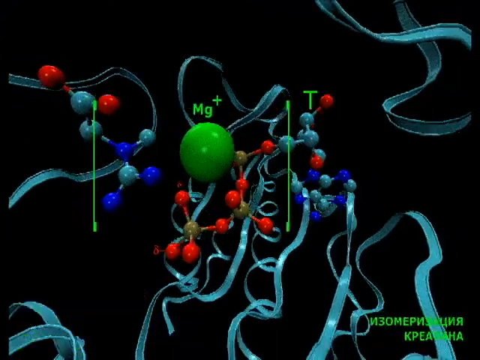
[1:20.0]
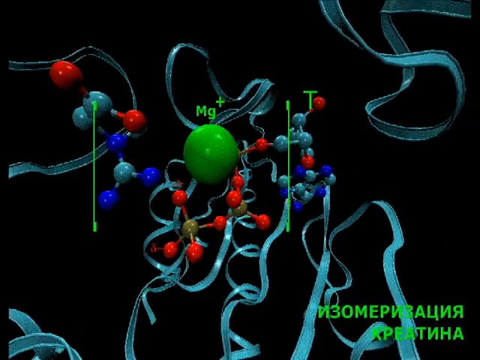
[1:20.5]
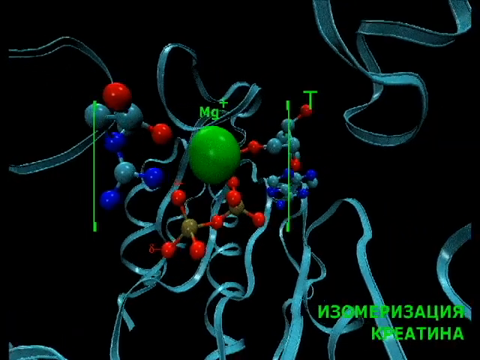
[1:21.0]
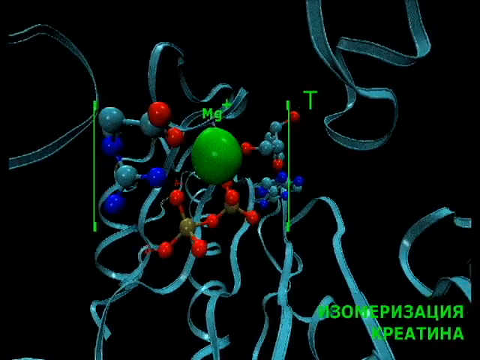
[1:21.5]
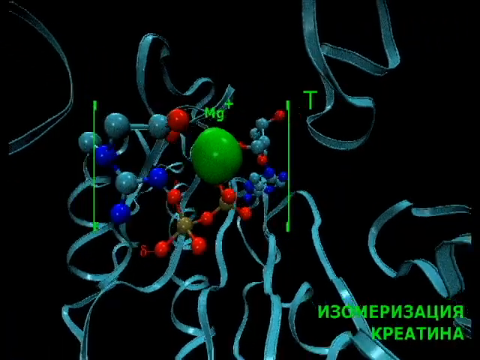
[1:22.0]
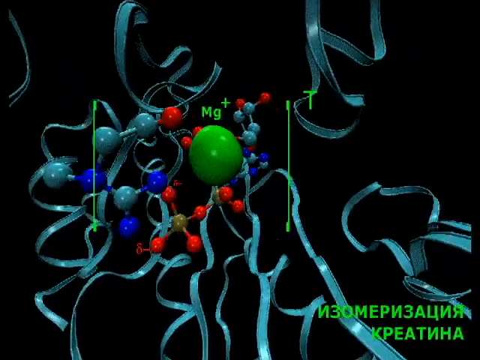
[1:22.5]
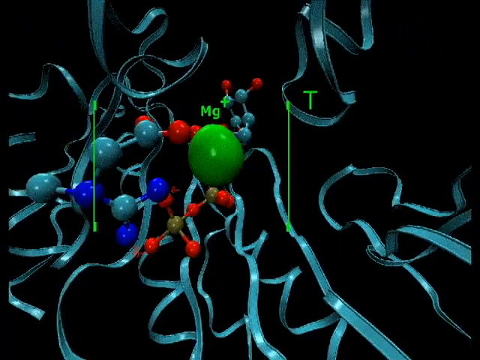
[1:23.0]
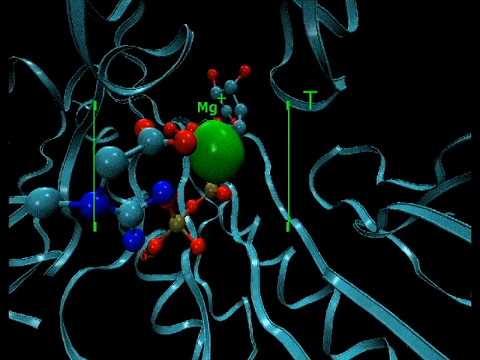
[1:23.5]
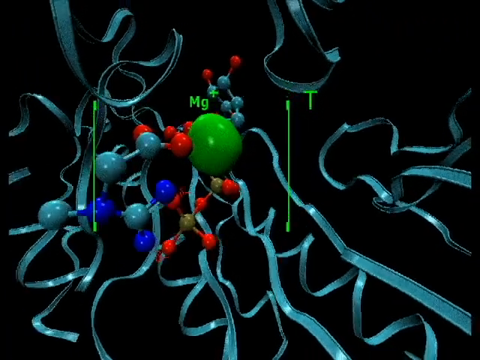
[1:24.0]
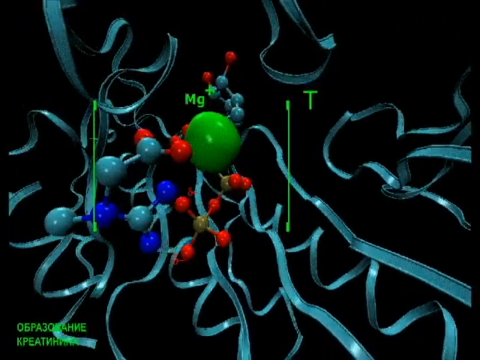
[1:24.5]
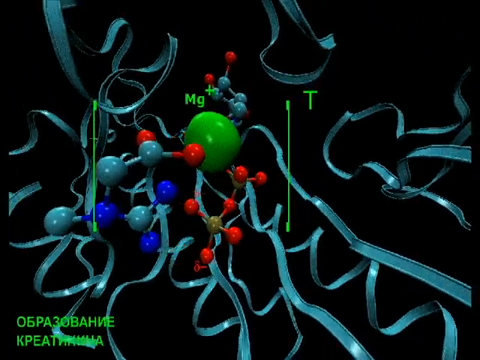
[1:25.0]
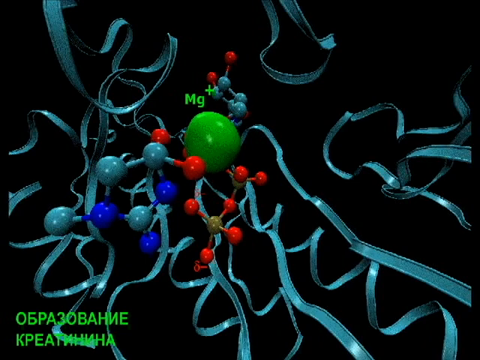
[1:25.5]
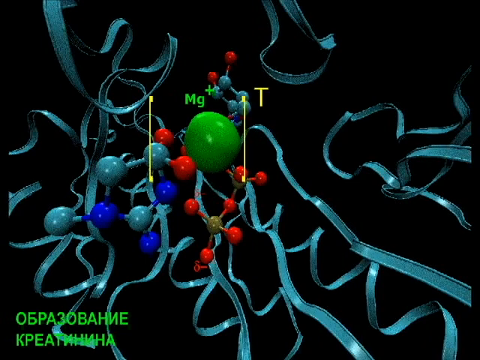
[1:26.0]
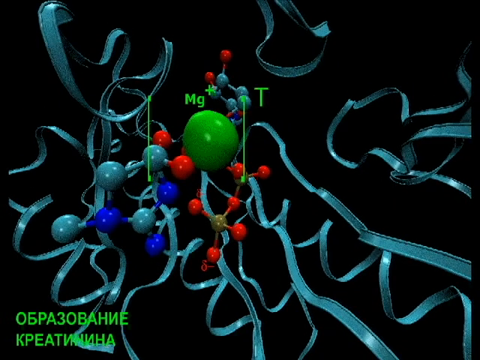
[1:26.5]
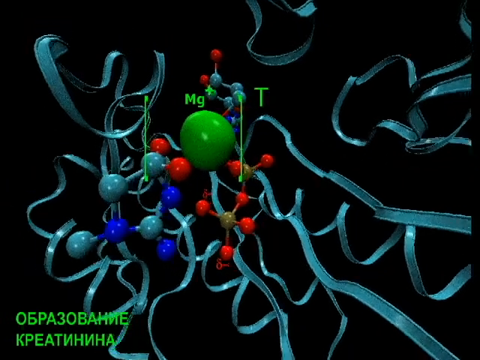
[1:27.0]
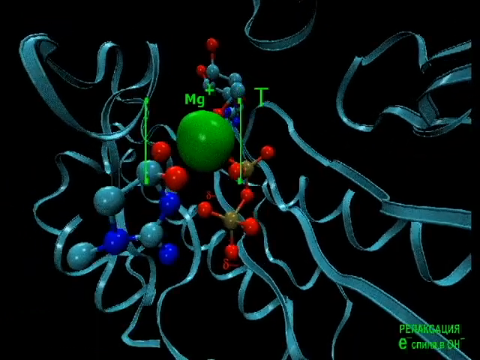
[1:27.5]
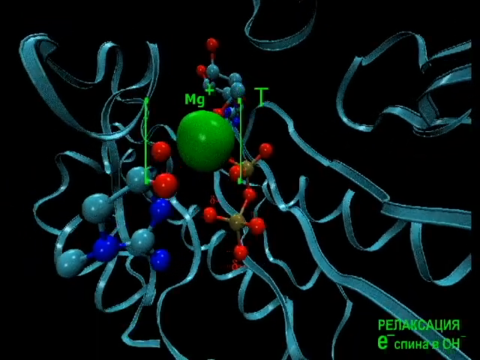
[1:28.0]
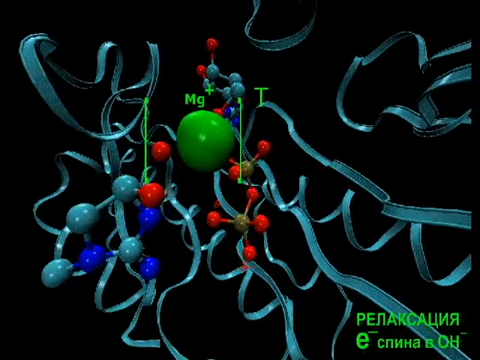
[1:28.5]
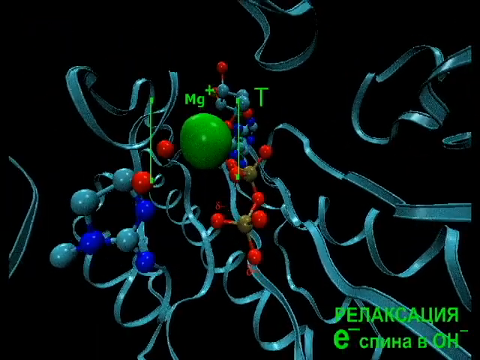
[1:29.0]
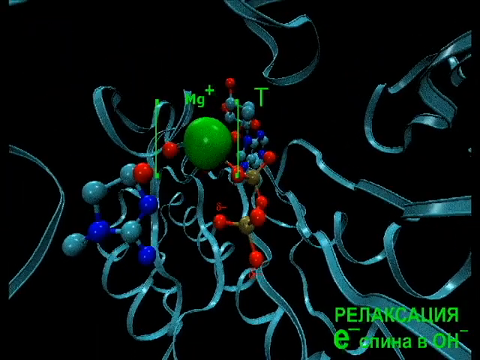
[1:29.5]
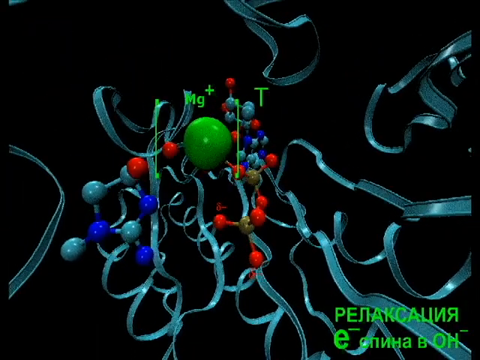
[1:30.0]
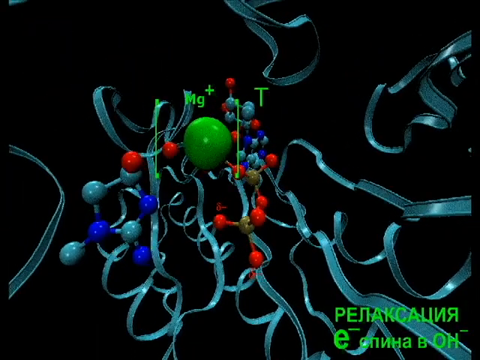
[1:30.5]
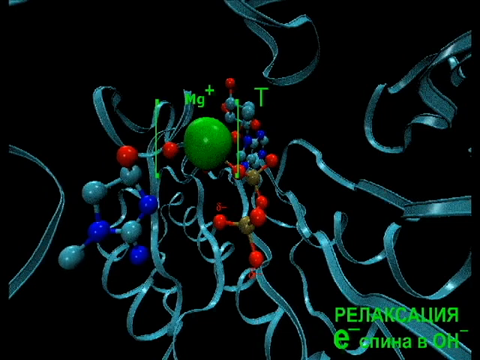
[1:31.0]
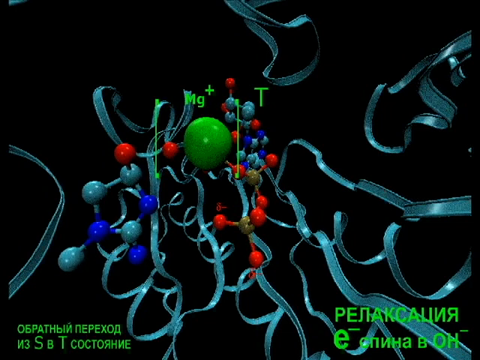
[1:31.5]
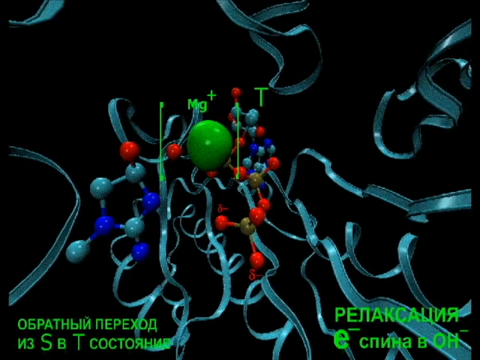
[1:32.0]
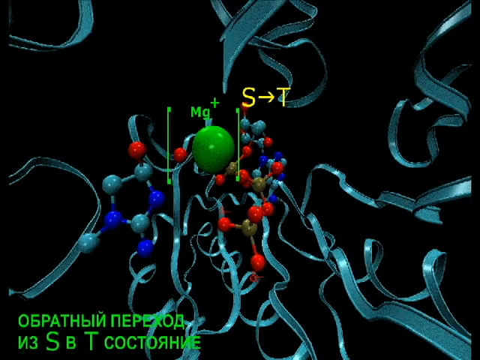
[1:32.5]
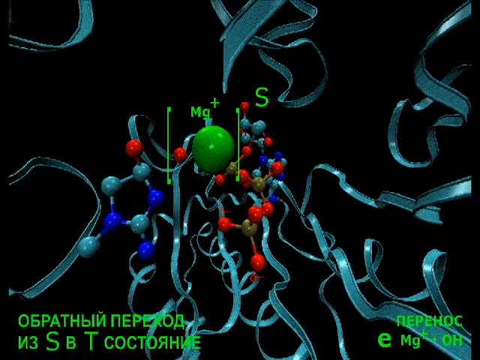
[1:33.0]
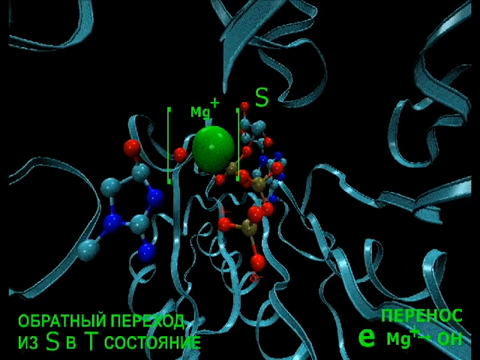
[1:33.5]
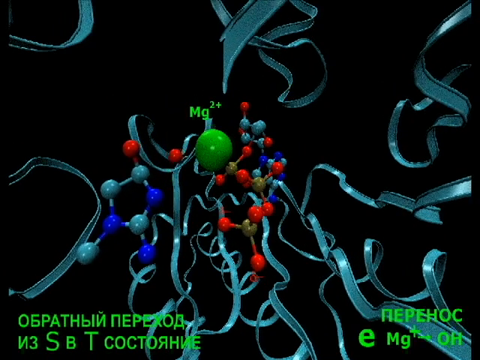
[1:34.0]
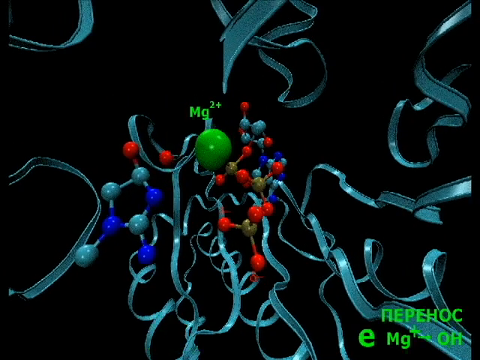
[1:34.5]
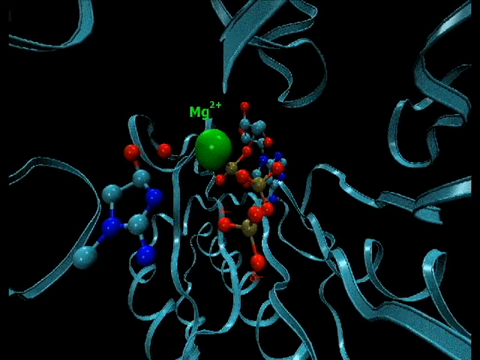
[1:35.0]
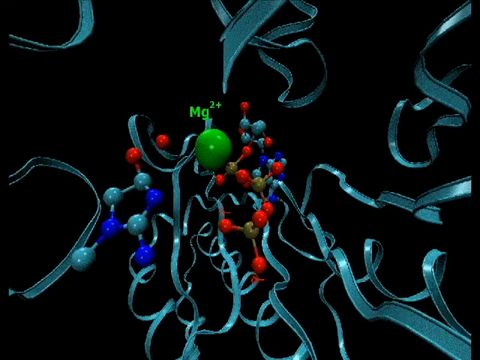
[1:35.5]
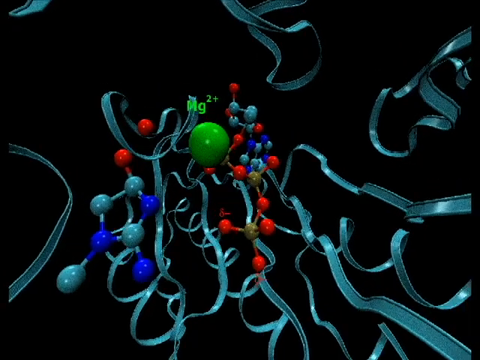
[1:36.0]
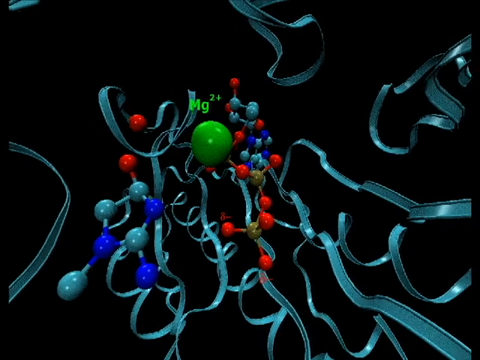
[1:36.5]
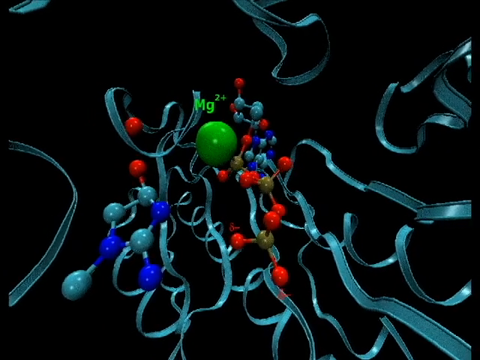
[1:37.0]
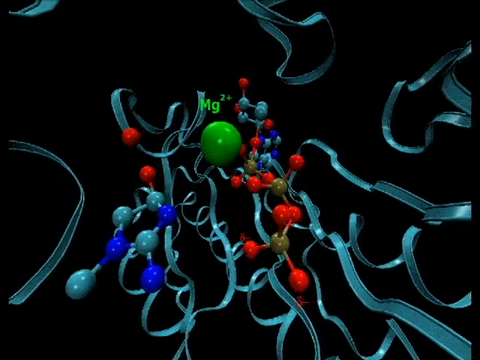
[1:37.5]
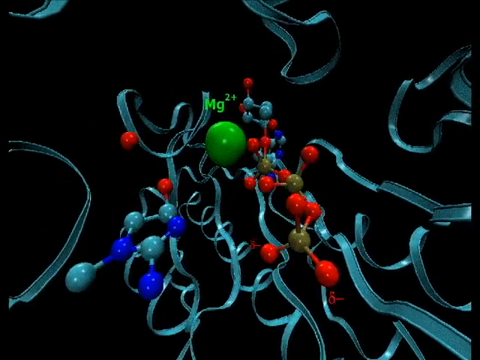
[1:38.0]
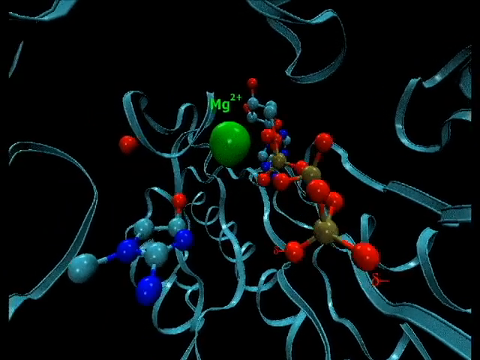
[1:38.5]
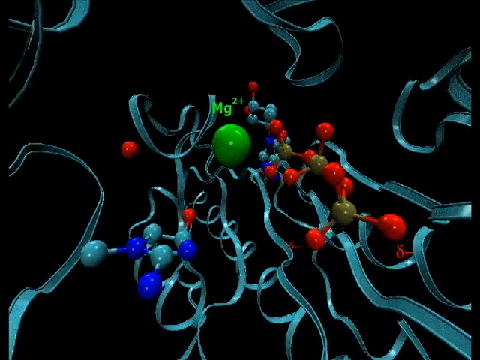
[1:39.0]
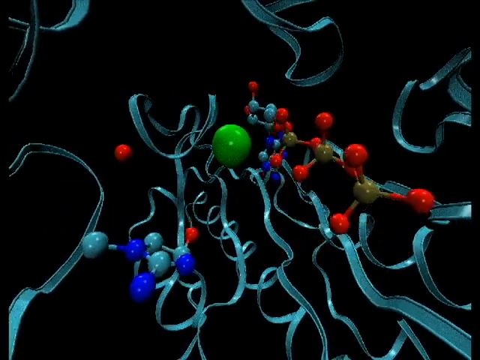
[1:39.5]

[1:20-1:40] A computer representation shows the three-dimensional structure of the protein creatine kinase and its reaction and bonding with two other molecules, ADP and creatine phosphate. The magnesium bonding location is shown from various angles and zoom levels, along with the complete 3D structure of the molecule and the interactions between the individual ions within the structure. The focus is a magnesium ion, initially Mg+, which then becomes Mg2+ following the reaction. A number of annotations written in Cyrillic appear on the screen. The three-dimensional structure of the creatine kinase is very complex, and even at a very zoomed-in level its strands and structures are intricate.